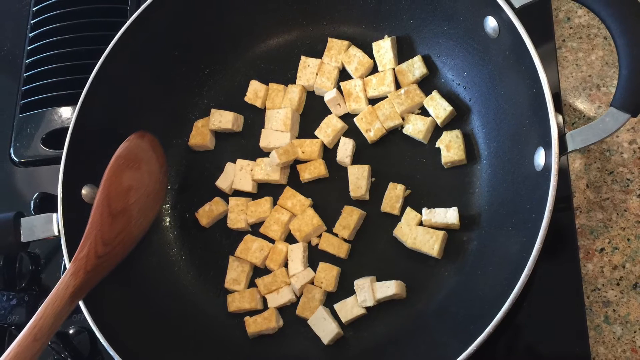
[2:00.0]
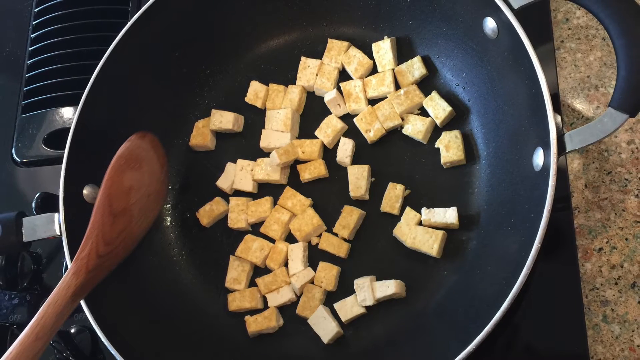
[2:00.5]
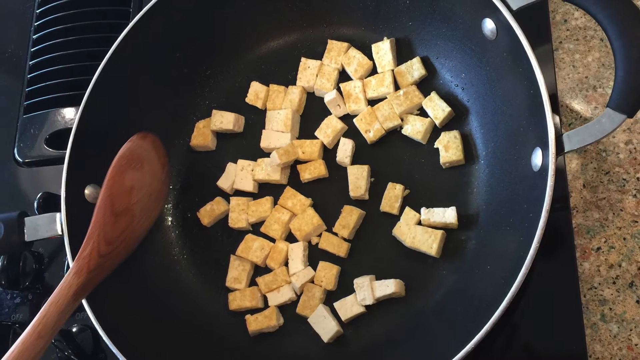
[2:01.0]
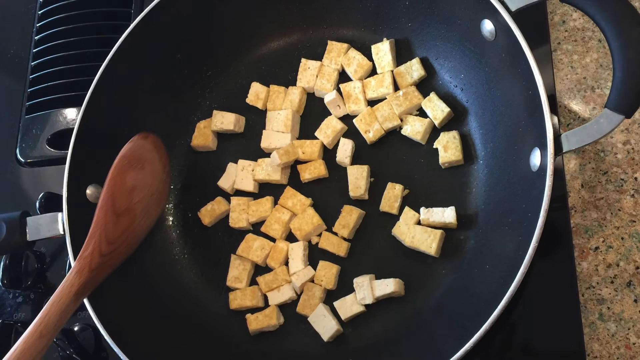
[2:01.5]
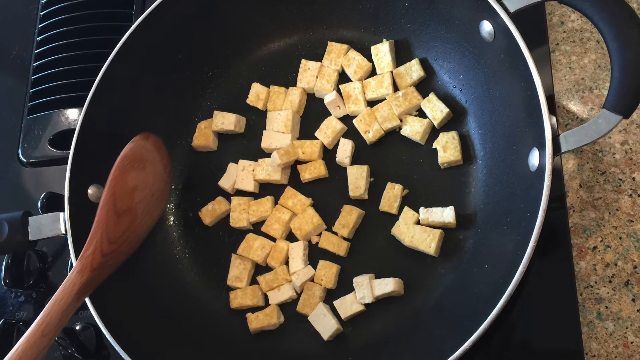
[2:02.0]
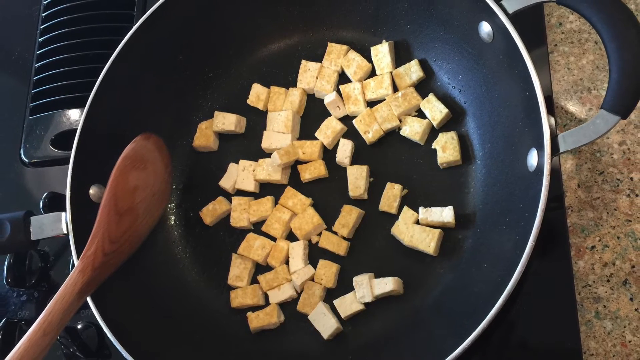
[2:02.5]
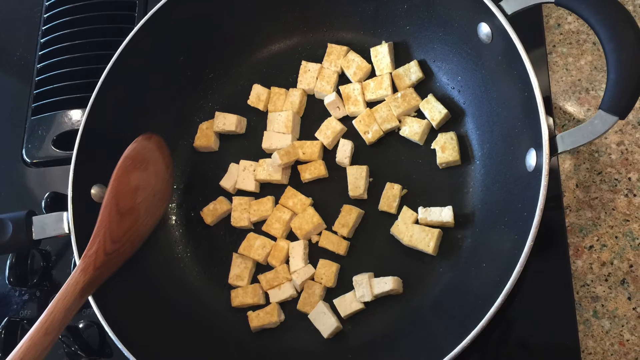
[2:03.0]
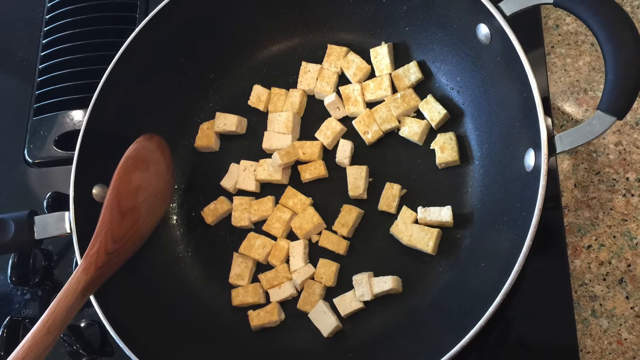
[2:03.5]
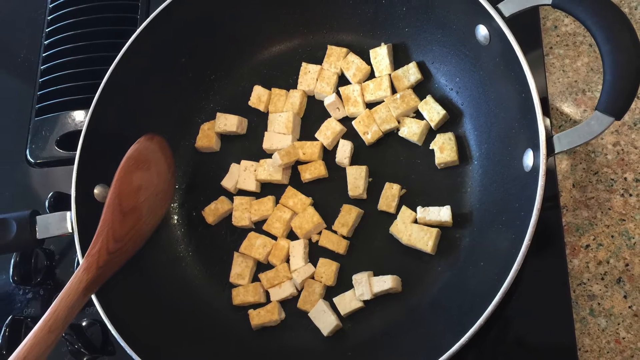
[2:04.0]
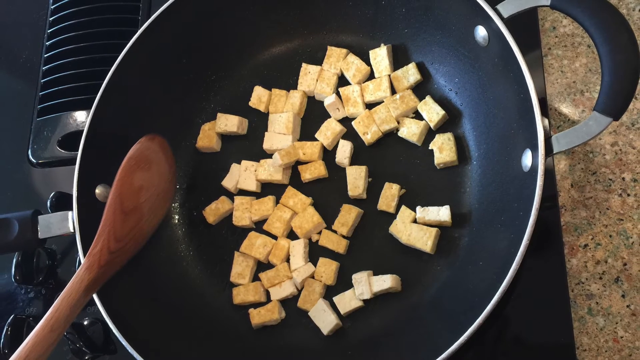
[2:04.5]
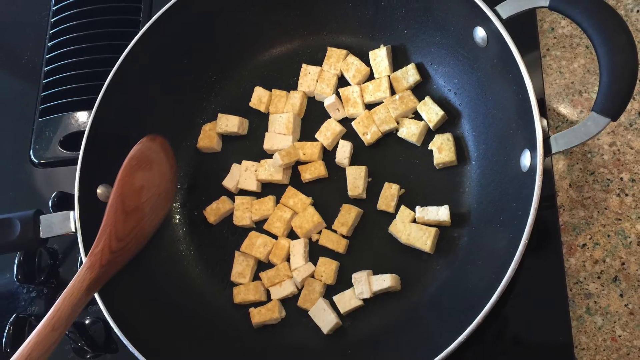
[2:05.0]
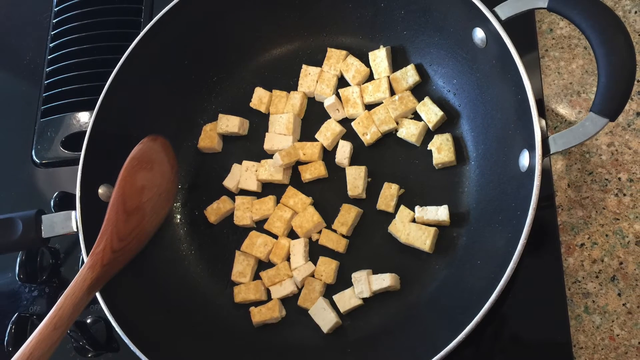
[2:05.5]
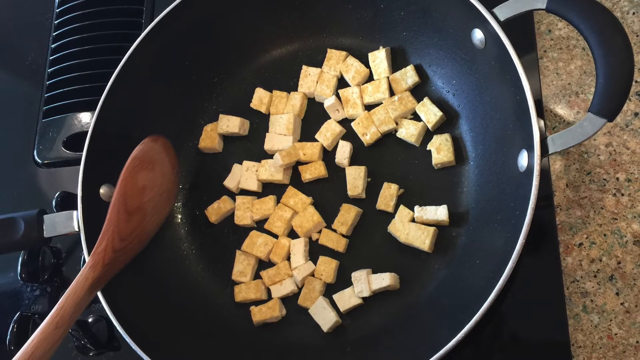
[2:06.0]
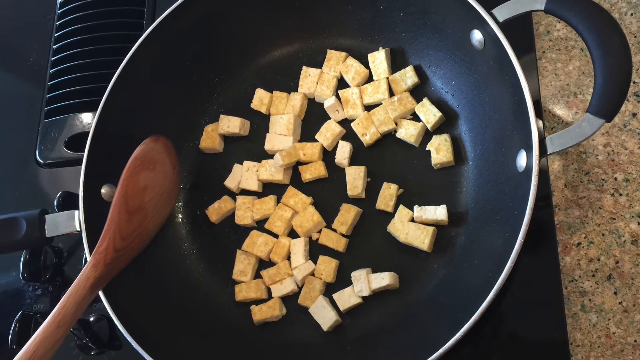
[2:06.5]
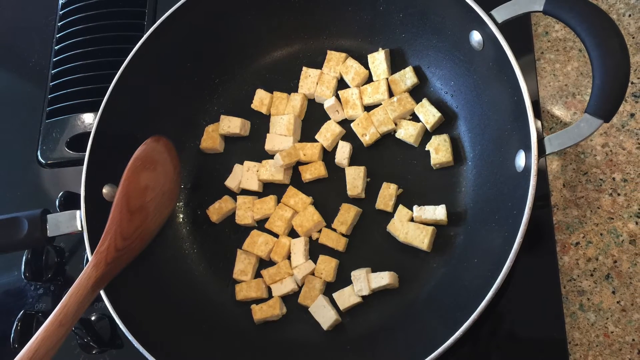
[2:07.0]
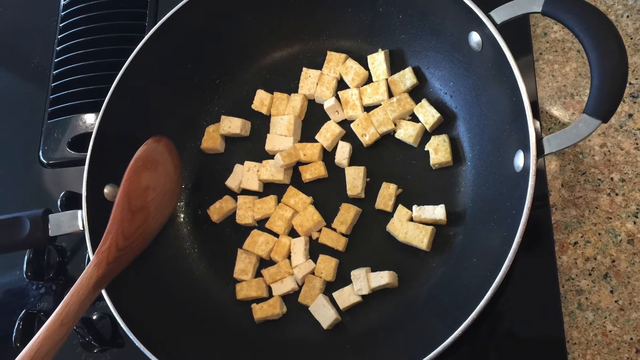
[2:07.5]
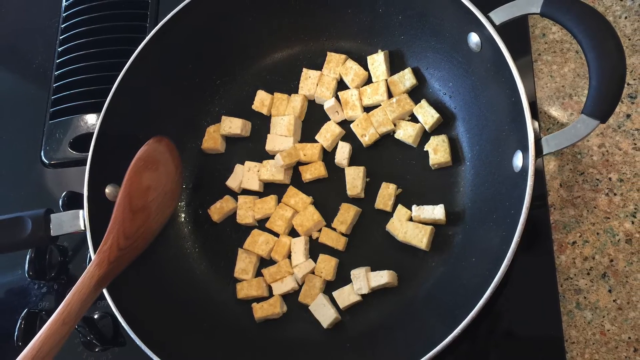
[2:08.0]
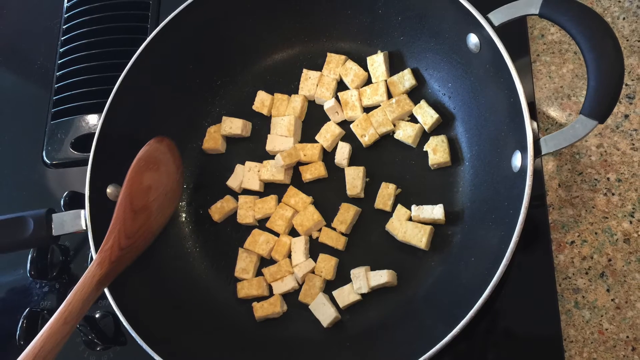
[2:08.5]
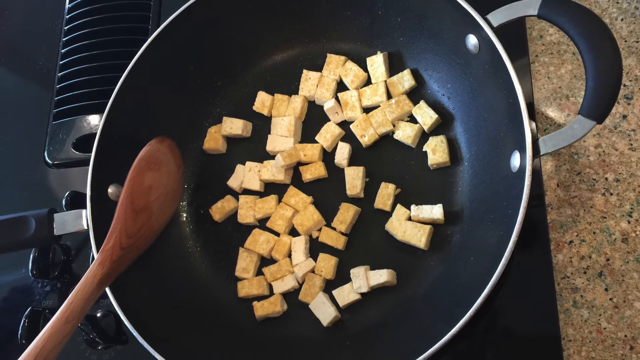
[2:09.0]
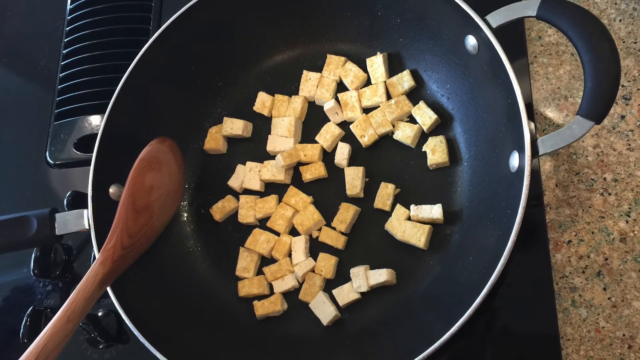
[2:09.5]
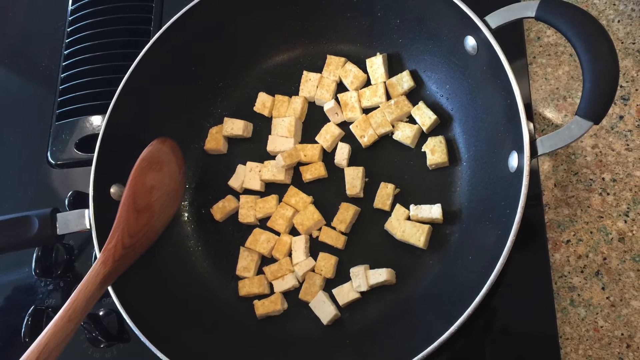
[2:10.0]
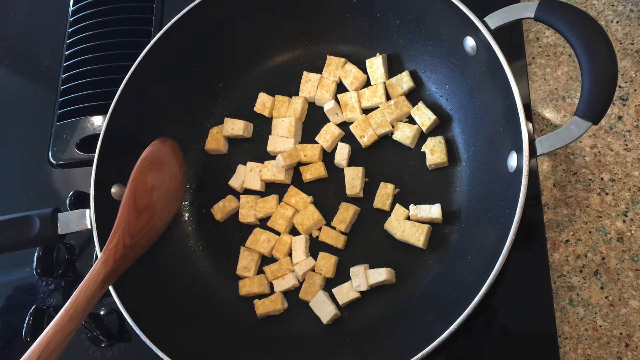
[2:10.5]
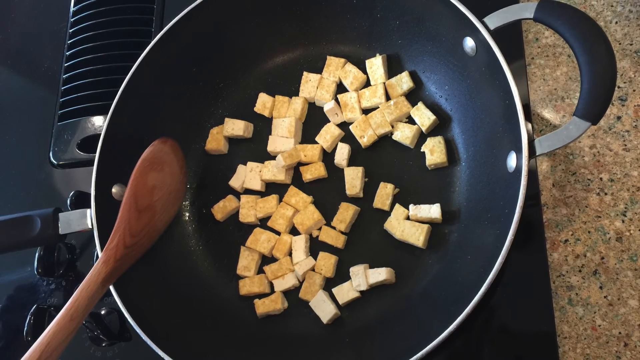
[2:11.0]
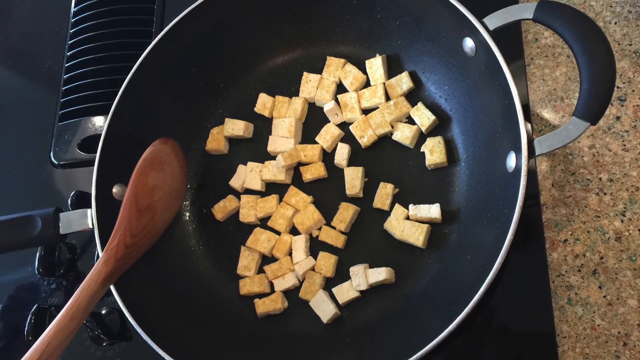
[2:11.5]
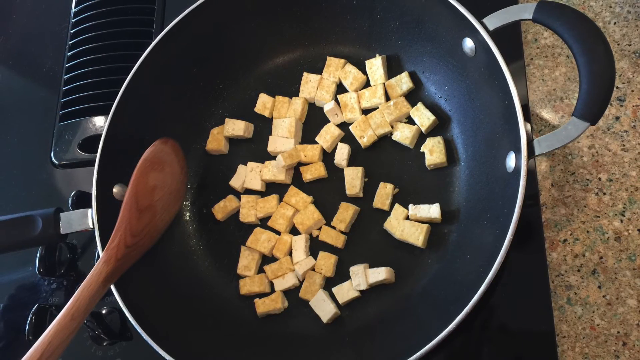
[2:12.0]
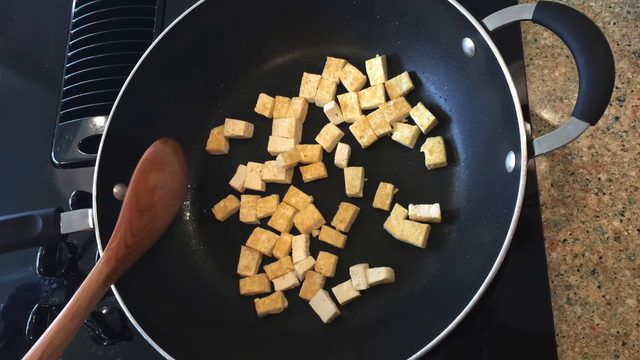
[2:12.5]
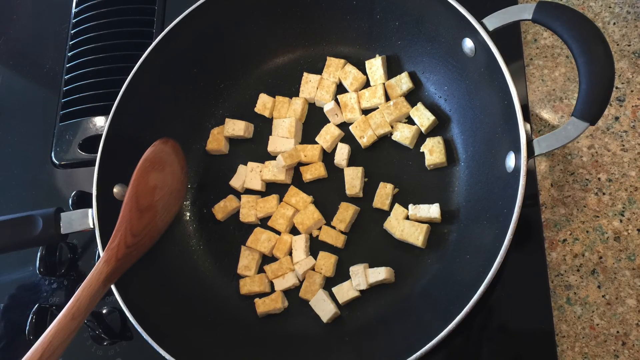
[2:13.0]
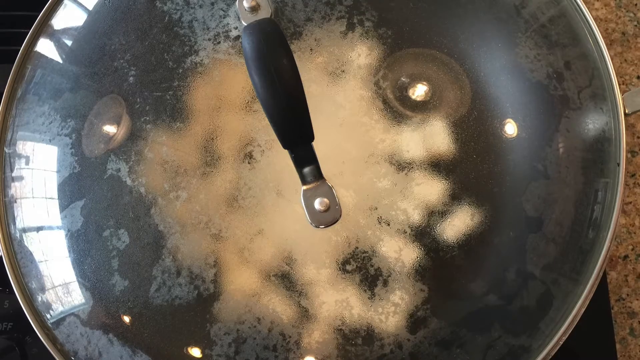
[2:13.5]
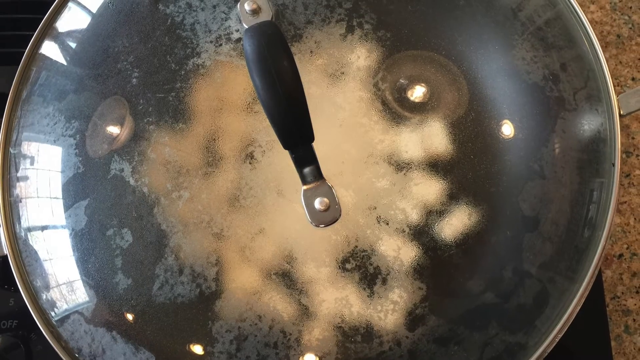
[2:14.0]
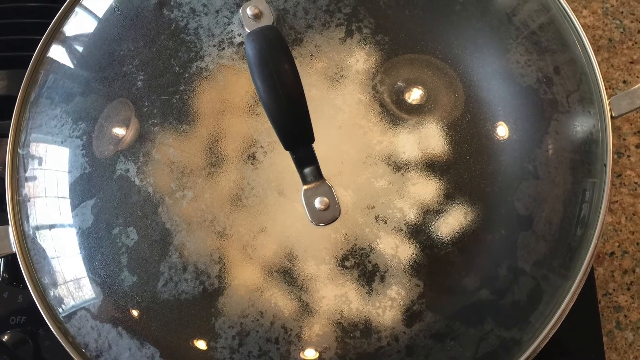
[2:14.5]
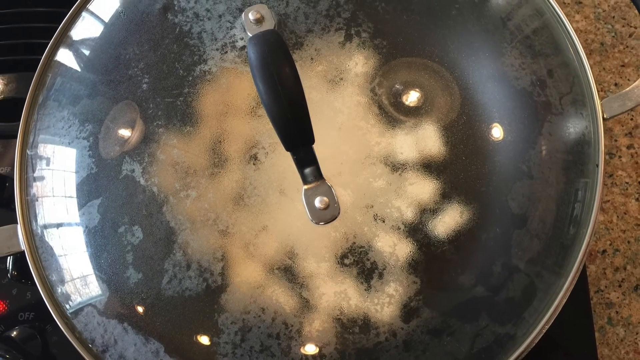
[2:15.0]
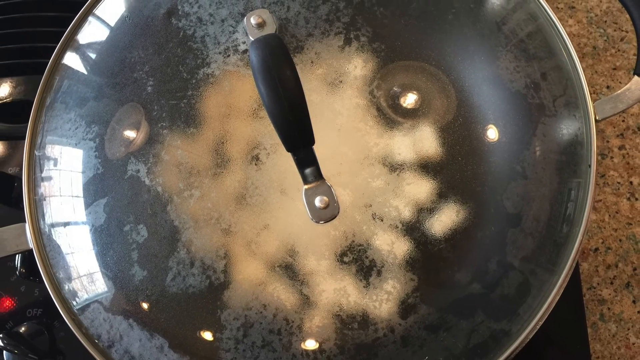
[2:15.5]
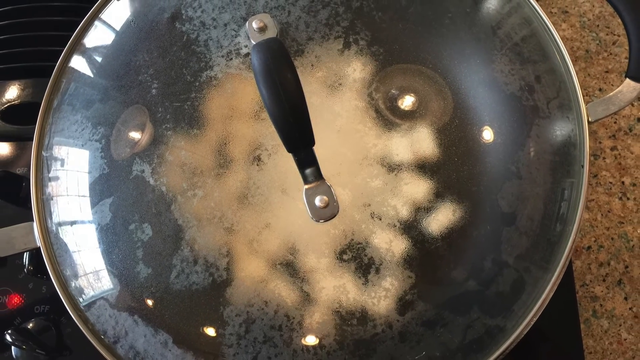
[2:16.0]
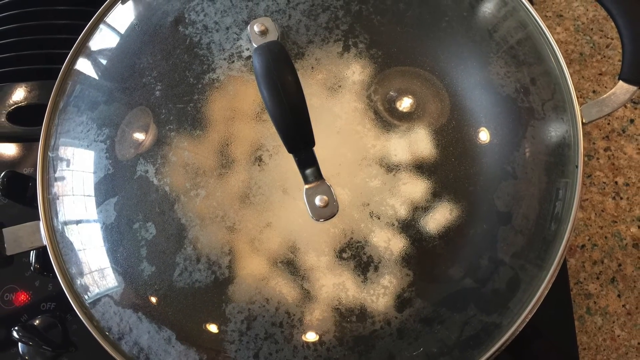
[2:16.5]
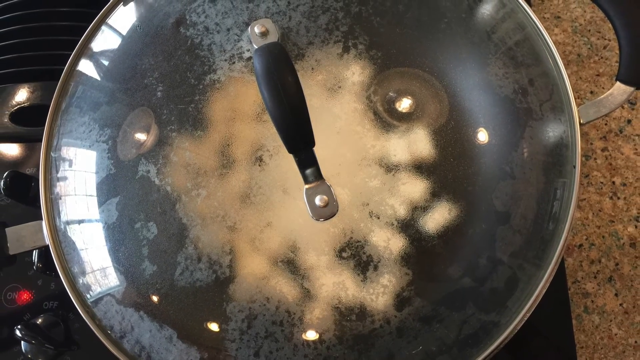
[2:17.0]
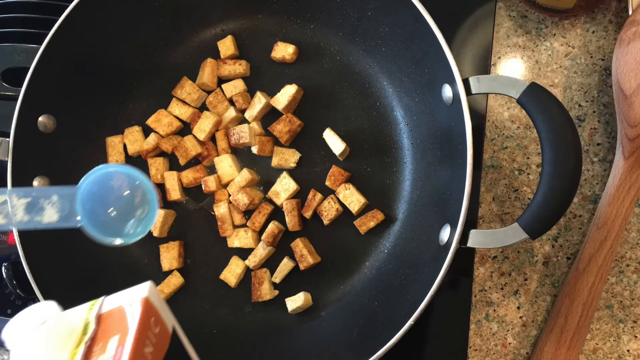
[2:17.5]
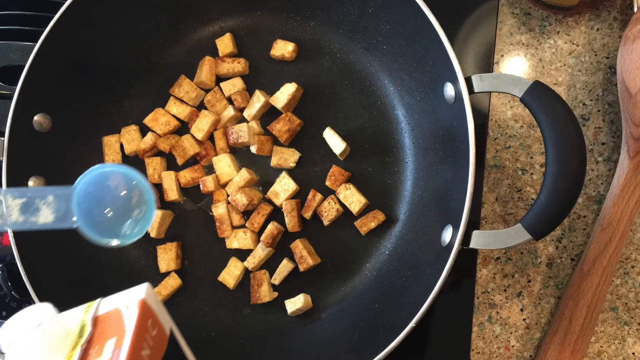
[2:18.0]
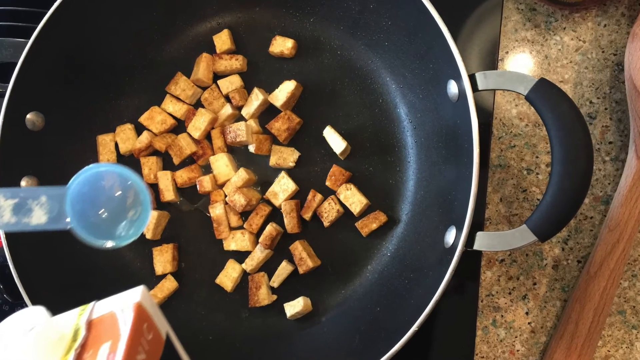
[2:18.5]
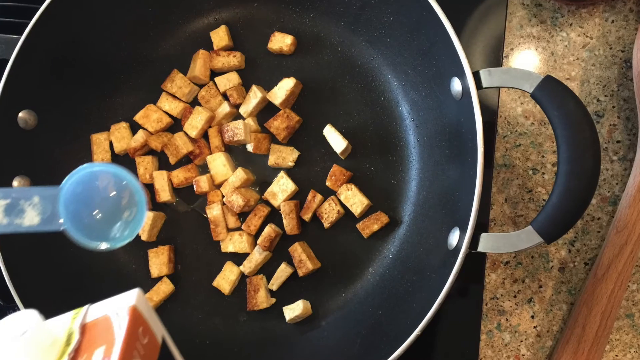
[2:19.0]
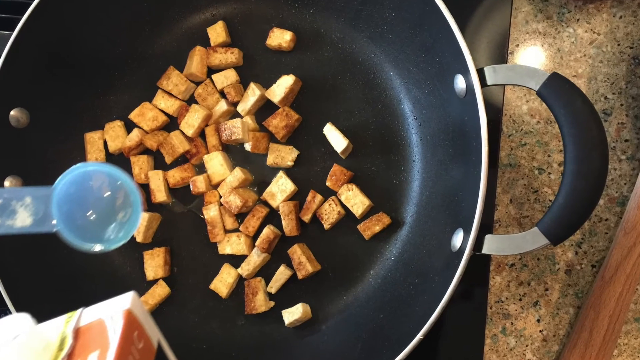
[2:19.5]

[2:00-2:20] Wood swirl marks are visible on the back part of the spoon; the handle looks dry and lighter in color. A black curved part of the handle looks like silicone. At the top left is what looks like a vertical vent, a black rectangular piece with about 8 curved horizontal slits. The camera zooms out, showing to the left and below the two black turn dials with writing around them indicating low or high. It zooms in again on the lid, with steam all around it. Then it looks like somebody has dumped something in on the left side, using a blue, clear-ish tablespoon. Most of the tofu in the middle looks basically cooked. At the bottom left part of a white carton is visible, possibly the chicken broth, though it is hard to tell because the shot is so zoomed in. Part of the wood handle of the spoon is visible on the right side.